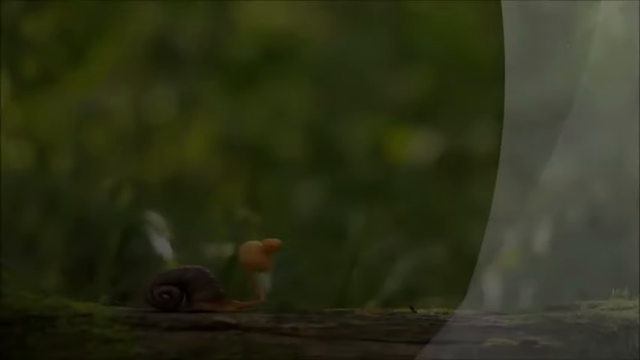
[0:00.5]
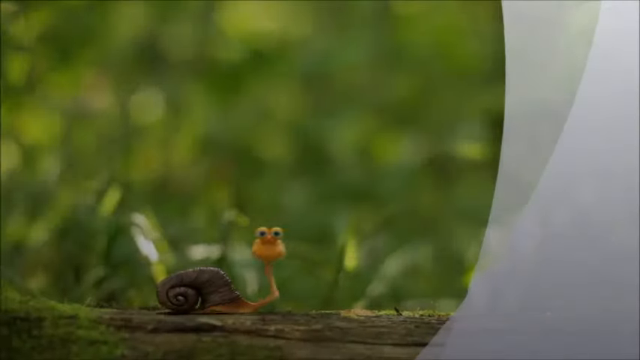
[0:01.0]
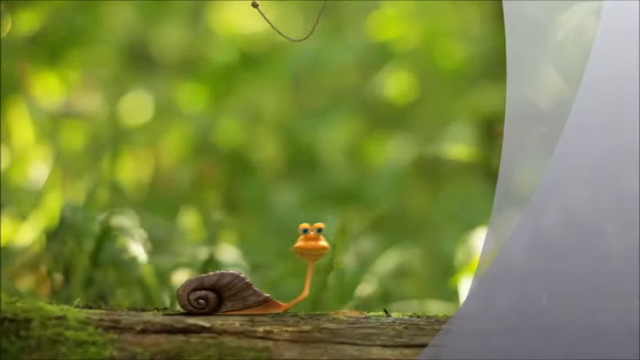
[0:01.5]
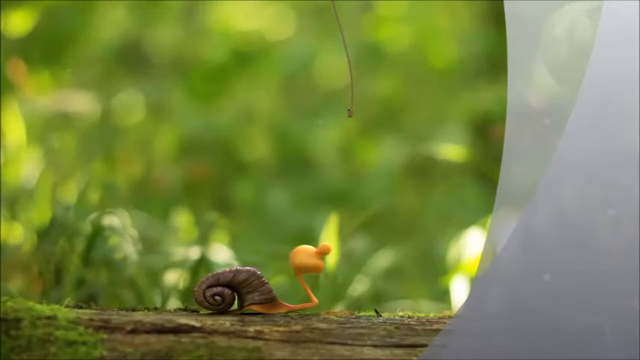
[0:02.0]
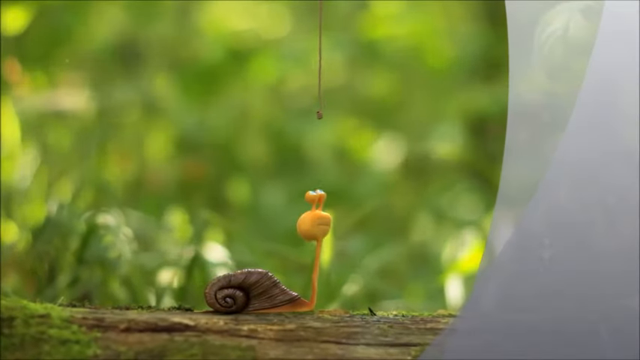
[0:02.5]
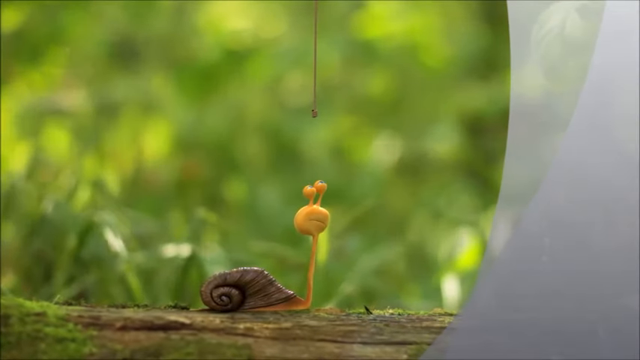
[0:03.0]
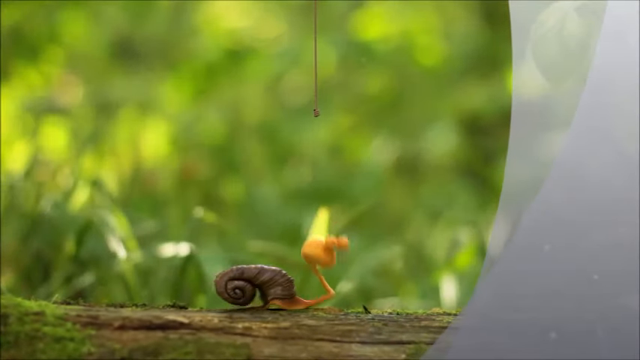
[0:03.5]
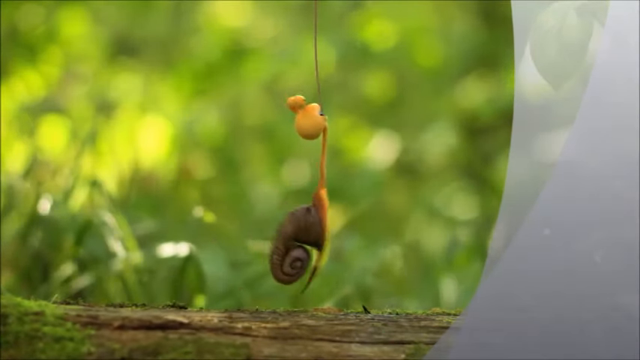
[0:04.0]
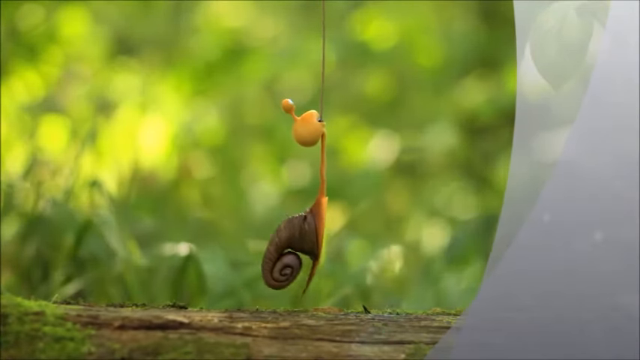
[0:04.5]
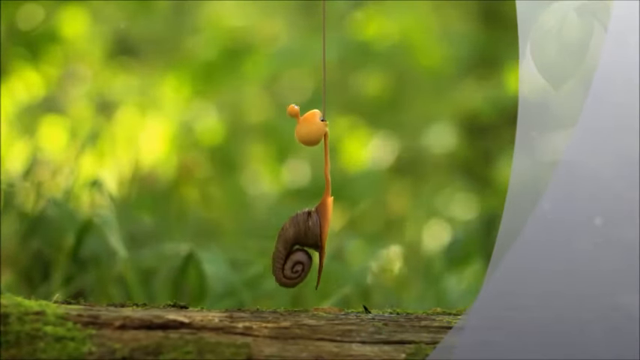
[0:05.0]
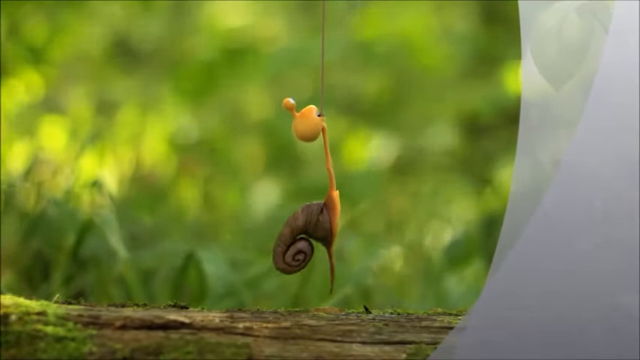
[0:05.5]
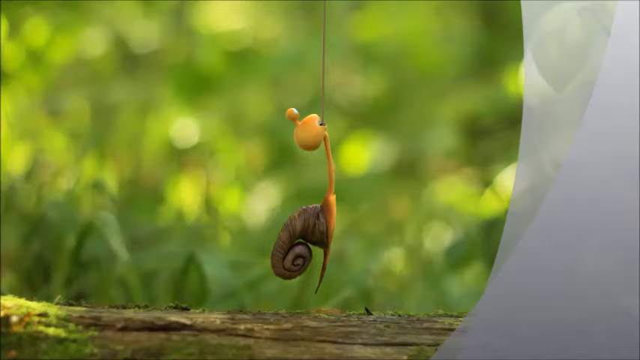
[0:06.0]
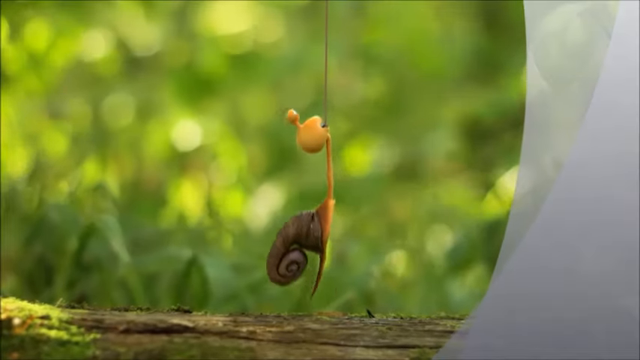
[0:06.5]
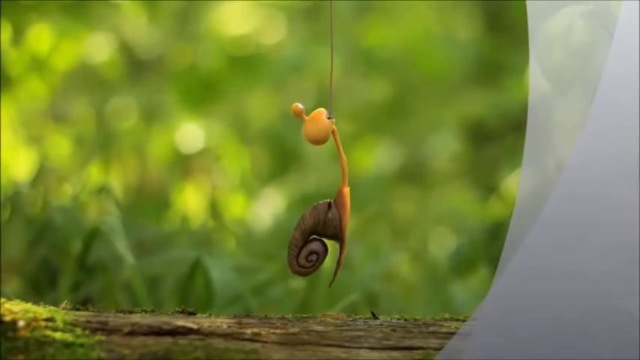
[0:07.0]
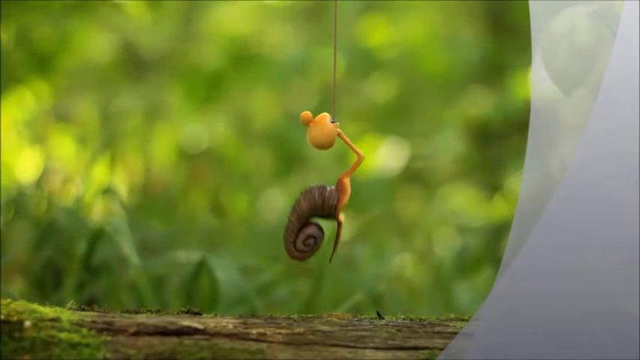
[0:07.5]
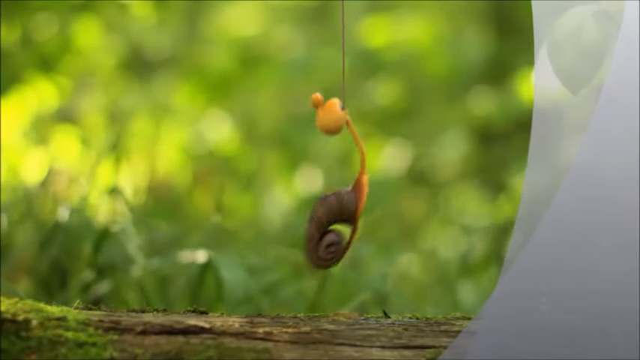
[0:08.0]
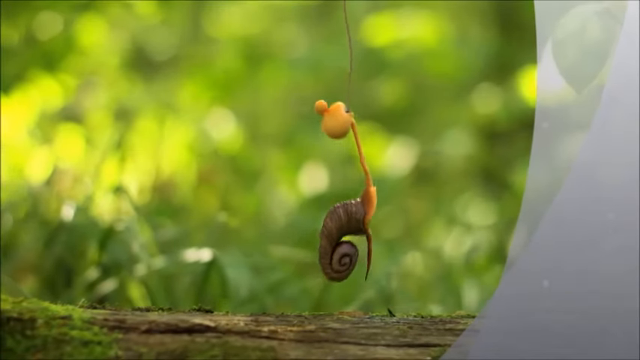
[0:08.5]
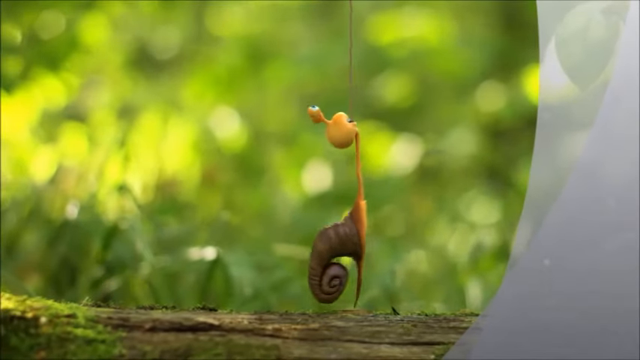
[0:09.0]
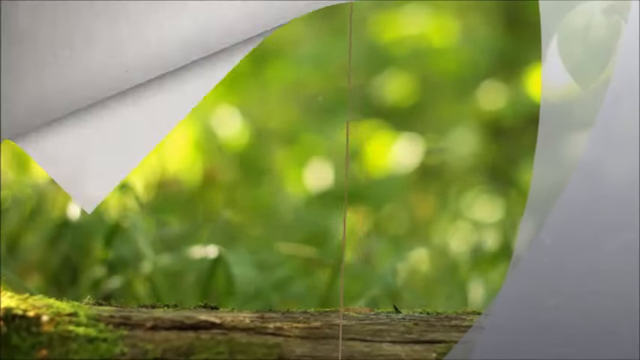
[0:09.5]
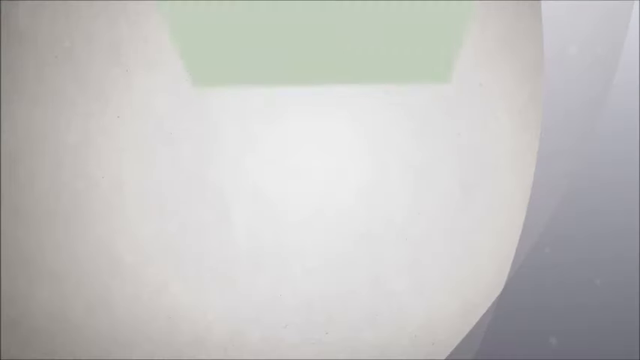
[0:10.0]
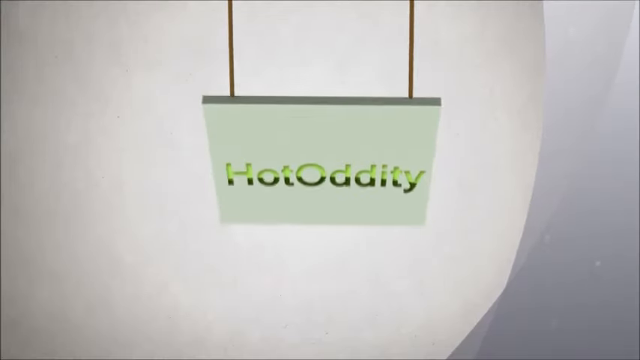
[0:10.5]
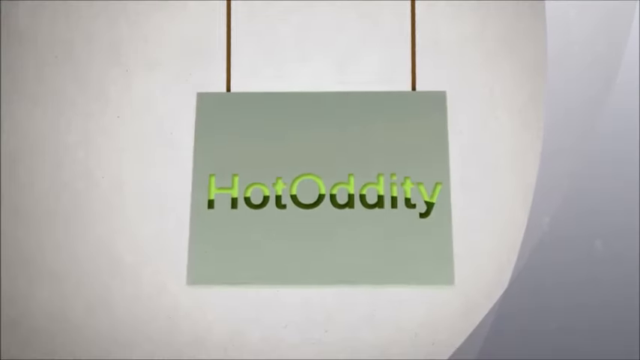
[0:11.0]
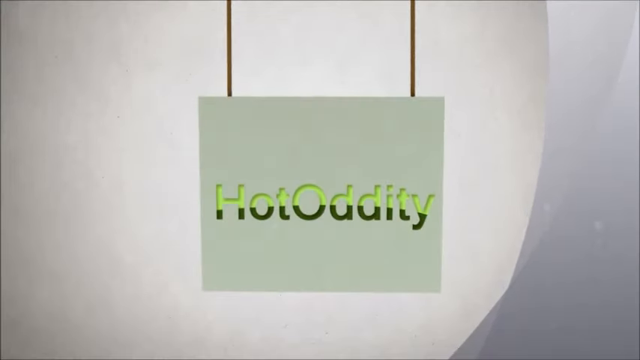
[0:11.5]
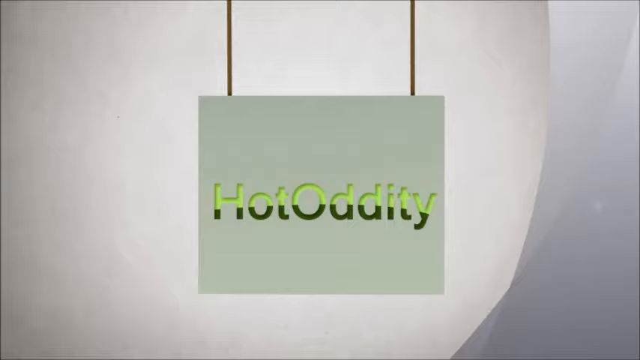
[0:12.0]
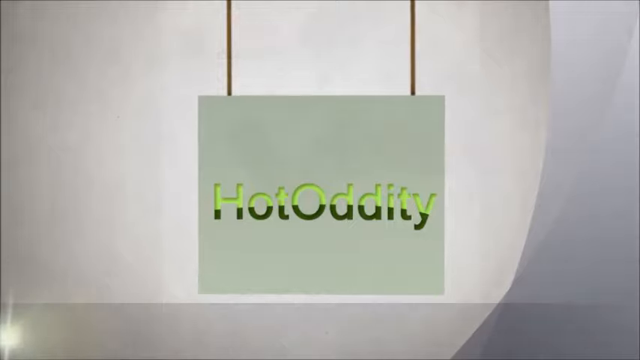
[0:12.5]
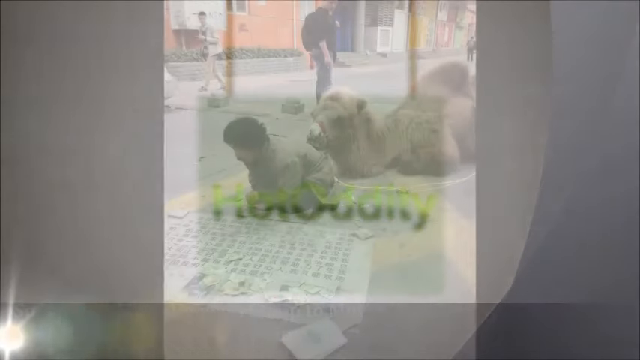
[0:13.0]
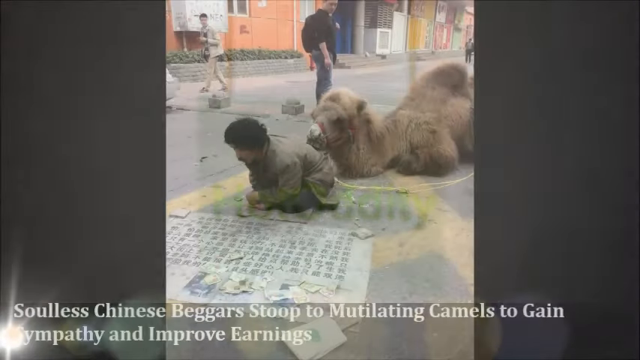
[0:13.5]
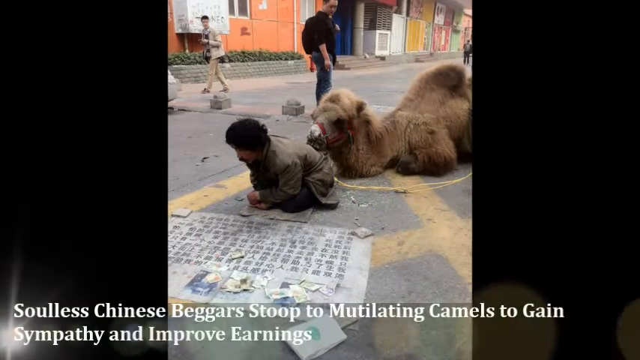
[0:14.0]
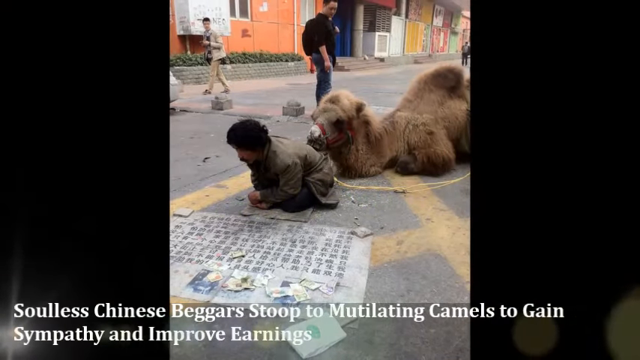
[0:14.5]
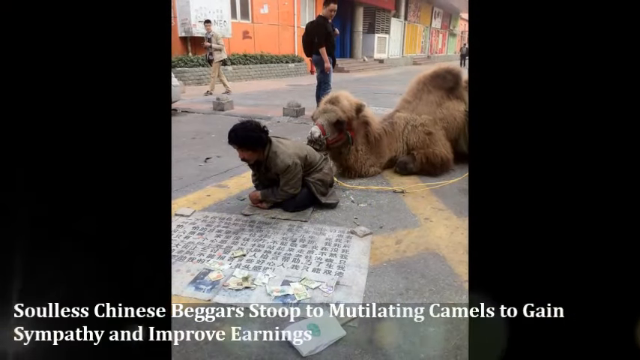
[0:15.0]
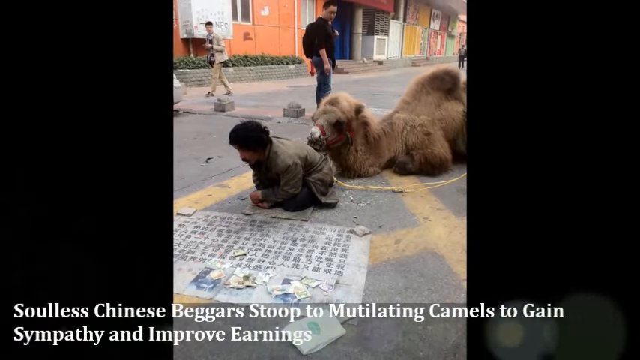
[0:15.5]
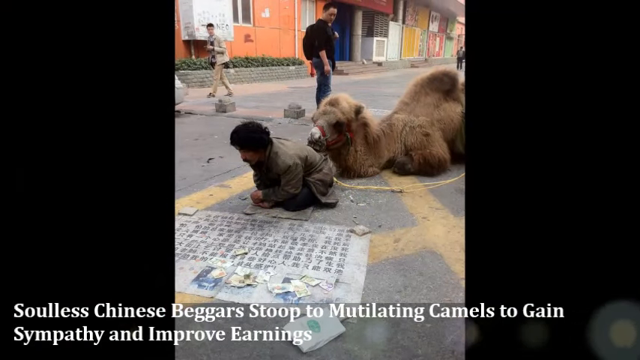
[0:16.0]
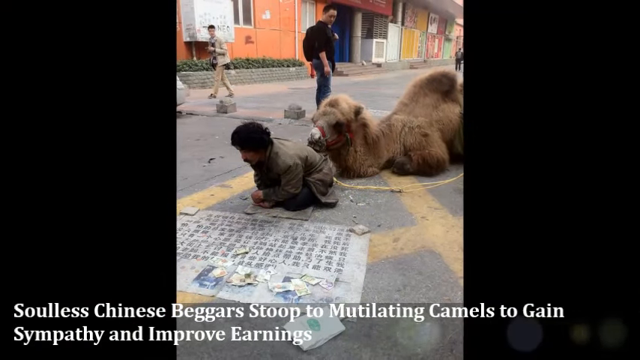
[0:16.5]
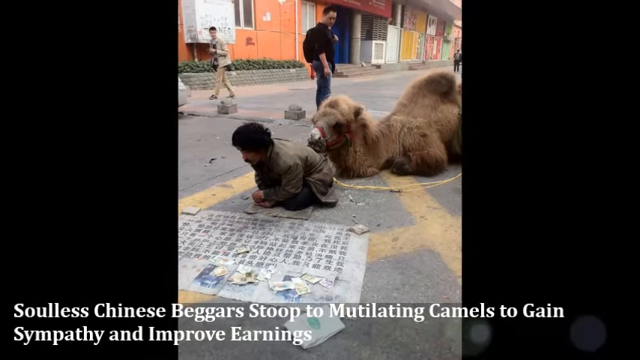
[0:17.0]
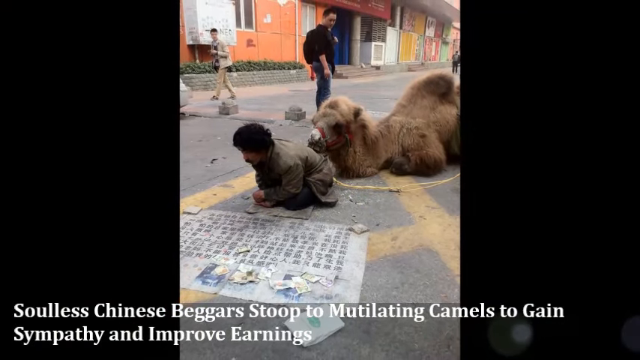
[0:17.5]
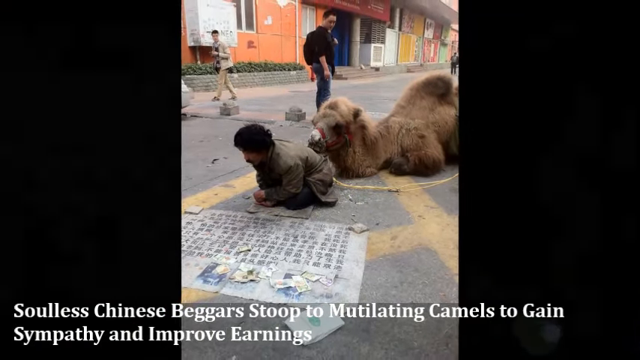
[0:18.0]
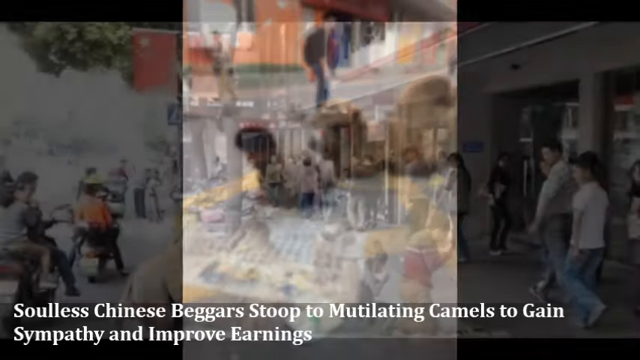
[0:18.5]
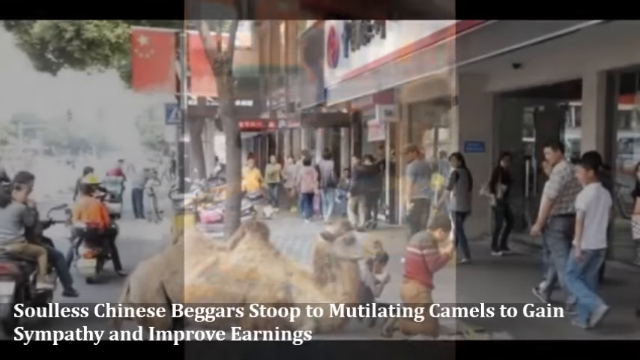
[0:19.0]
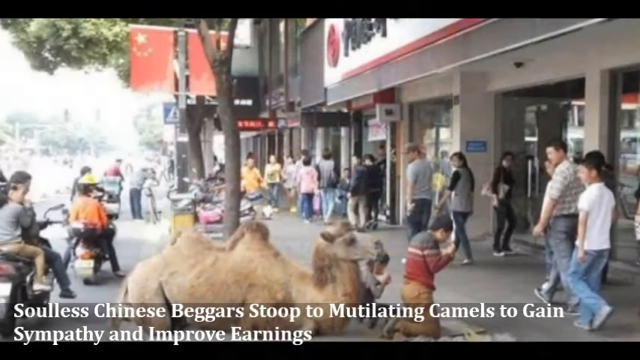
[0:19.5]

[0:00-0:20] The video opens with what appears to be a CGI snail slithering across the screen. Its shell is brown and its body is orange, and it appears to be computer generated. At one point the snail pulls on a string, as if a curtain or screen is attached to it, and a screen is pulled down. Another computer graphic with the words "Hot Oddity" in two shades of green waves in the wind. Next comes what appears to be a picture of a beggar in China with a camel beside him; the person is apparently begging for money and using the camel to elicit sympathy from passersby. It is a still image of a street scene with the beggar and the camel, with many people walking by, standing and sitting around the beggar as he asks for money. The humps of the camel are visible, along with various street life.